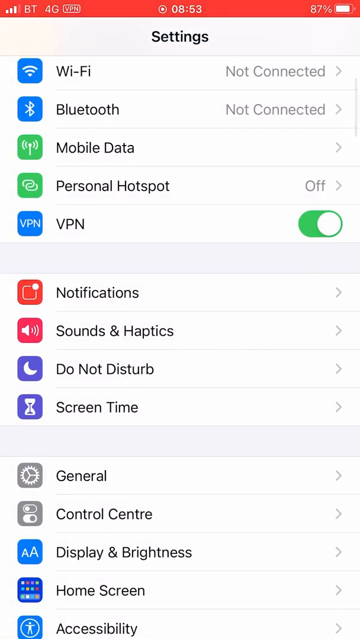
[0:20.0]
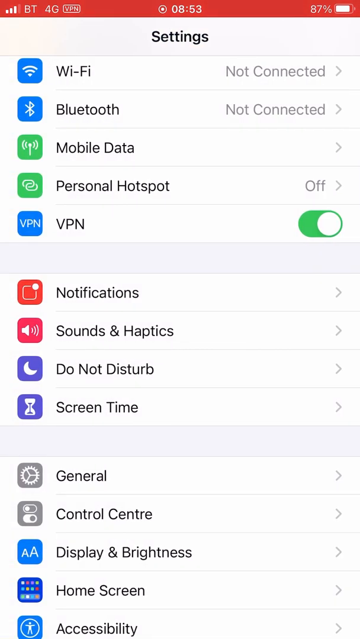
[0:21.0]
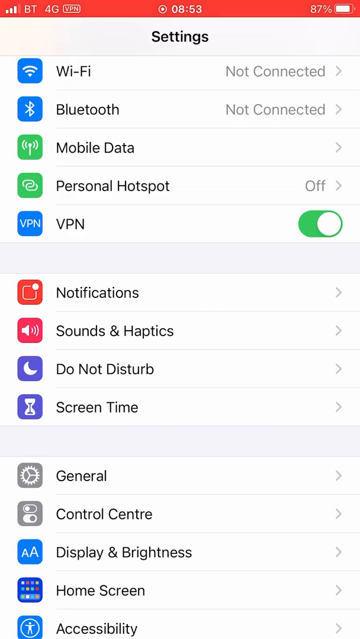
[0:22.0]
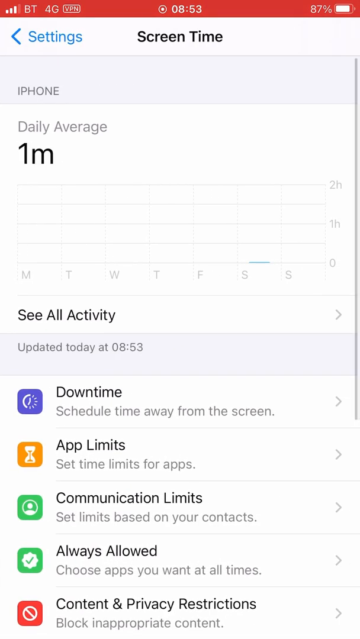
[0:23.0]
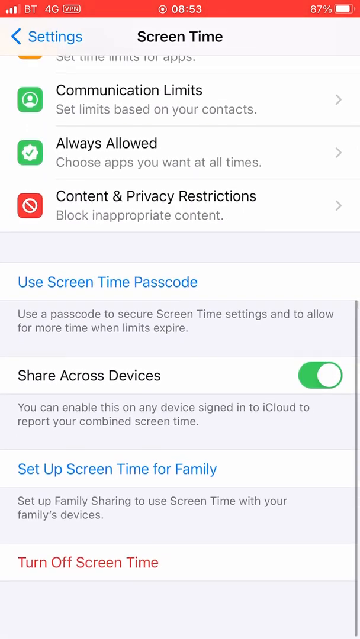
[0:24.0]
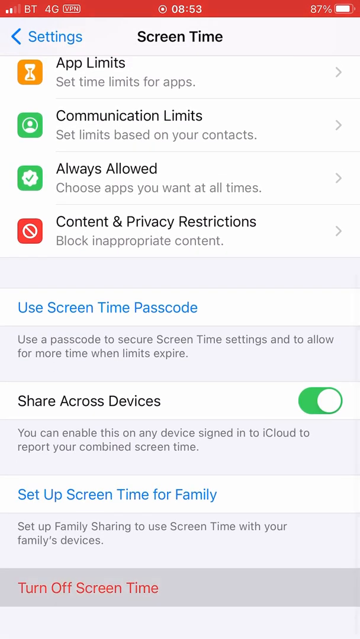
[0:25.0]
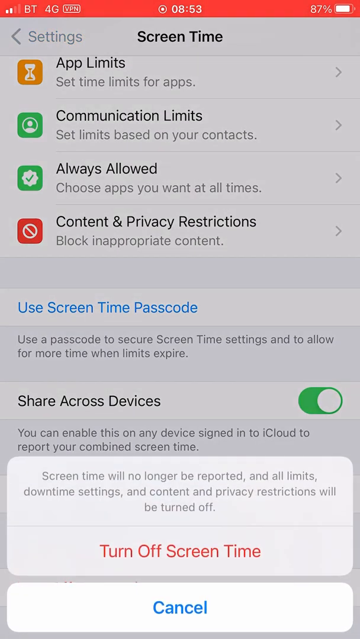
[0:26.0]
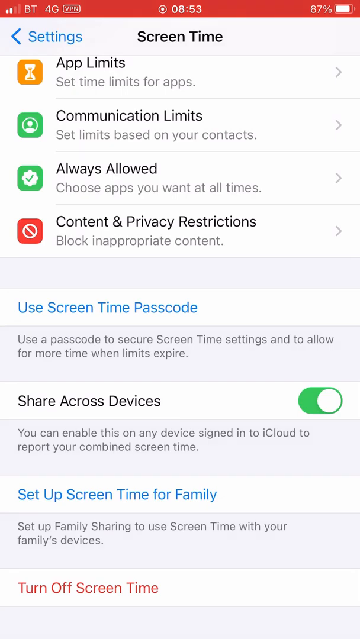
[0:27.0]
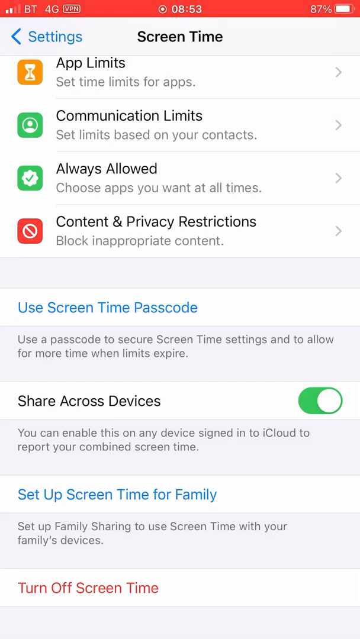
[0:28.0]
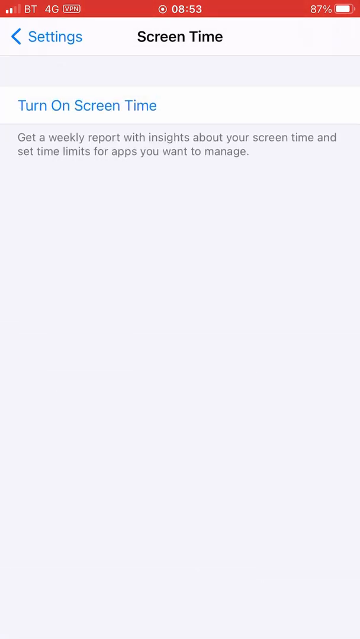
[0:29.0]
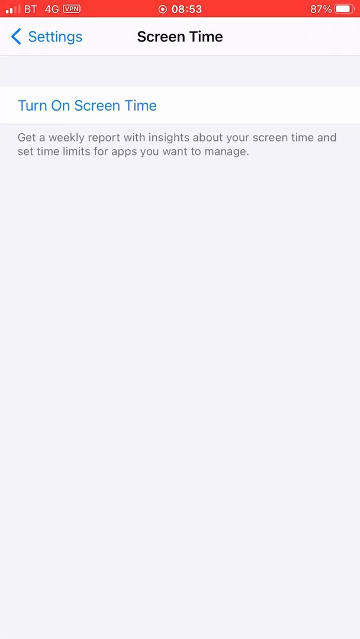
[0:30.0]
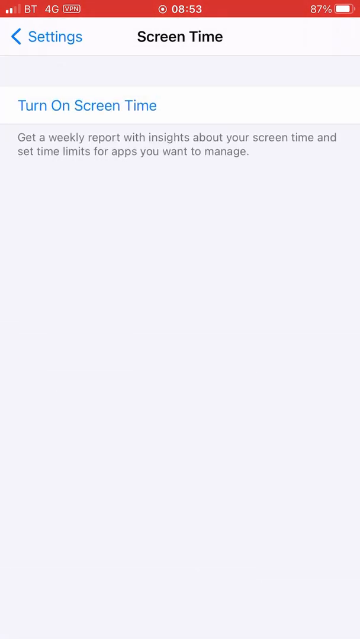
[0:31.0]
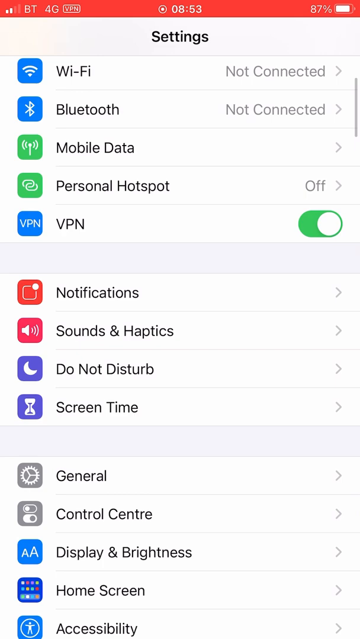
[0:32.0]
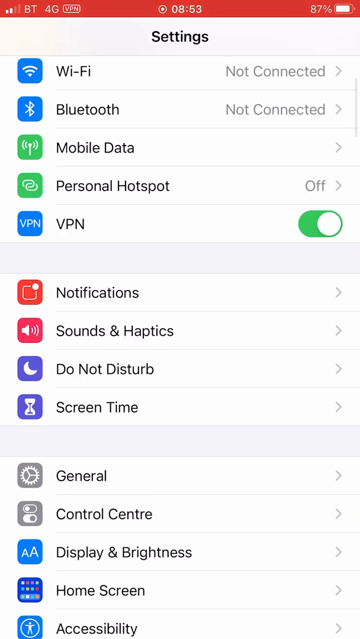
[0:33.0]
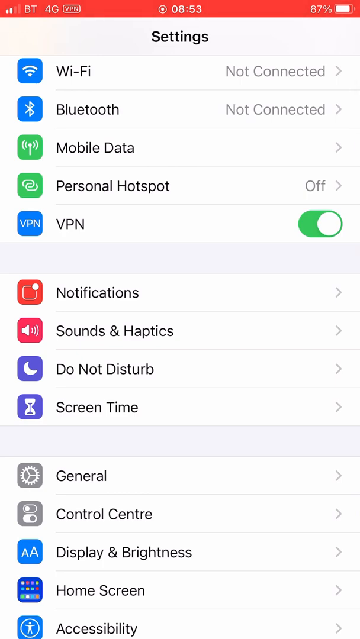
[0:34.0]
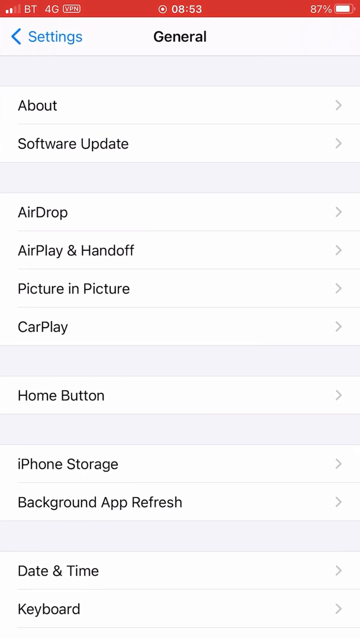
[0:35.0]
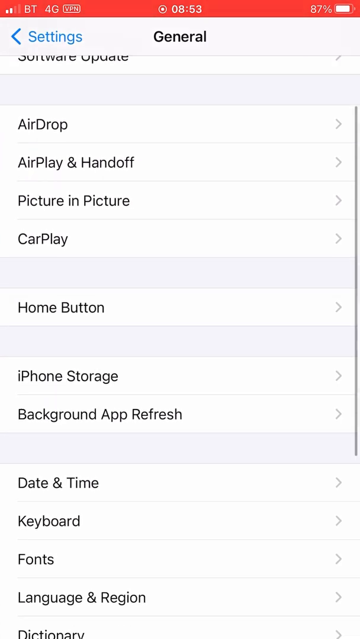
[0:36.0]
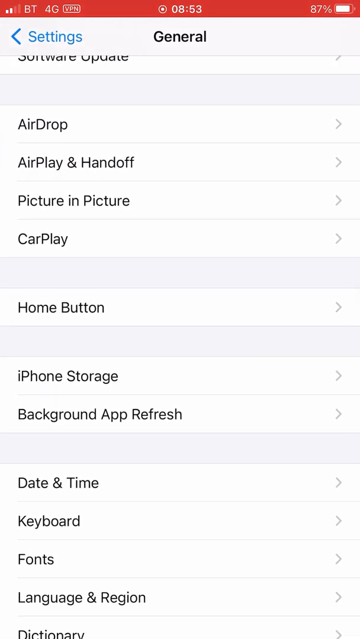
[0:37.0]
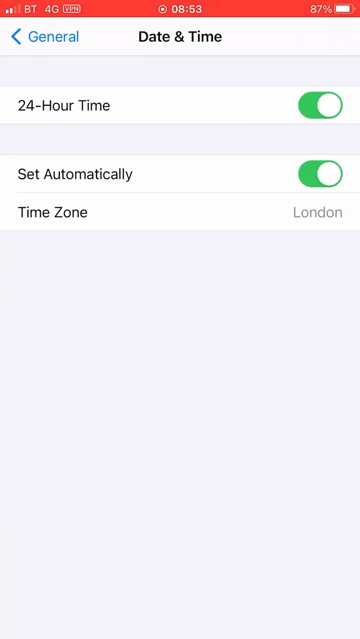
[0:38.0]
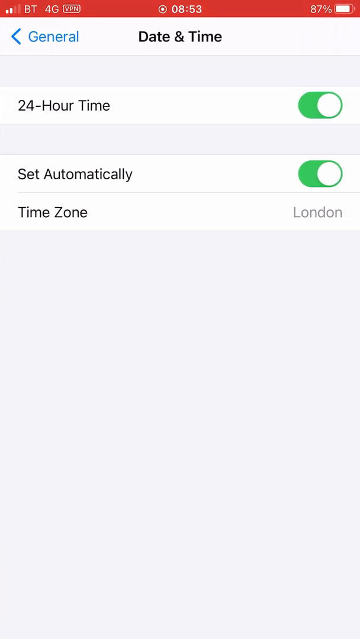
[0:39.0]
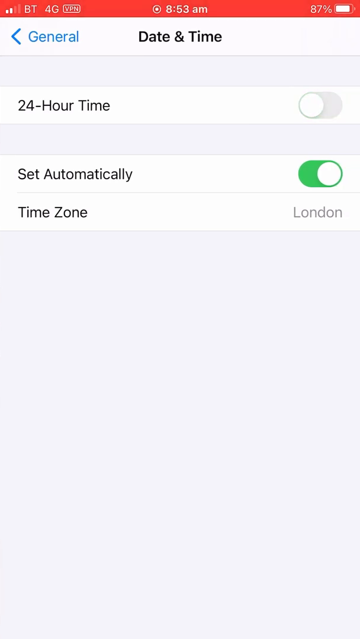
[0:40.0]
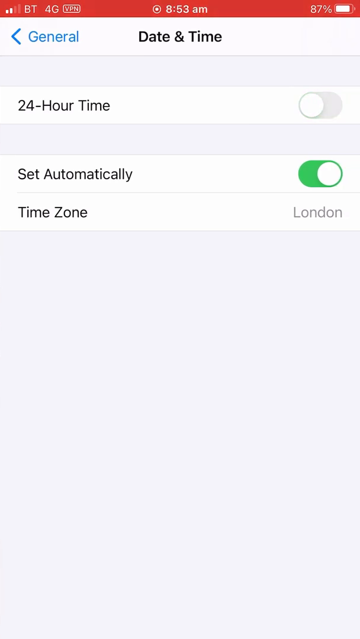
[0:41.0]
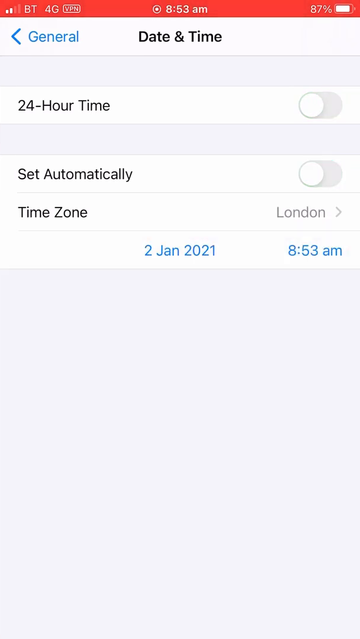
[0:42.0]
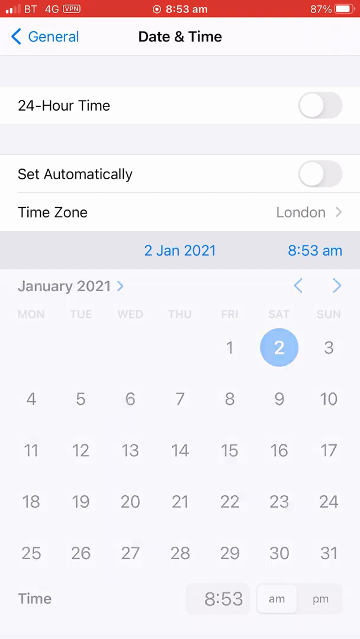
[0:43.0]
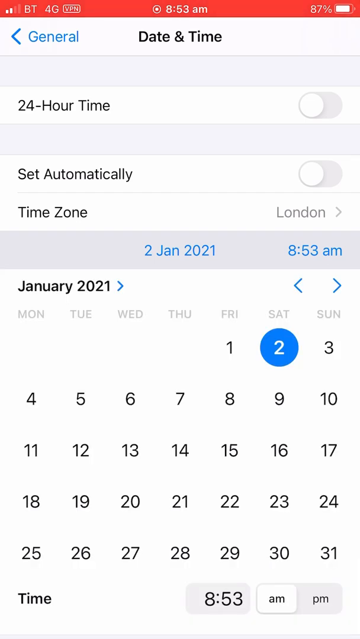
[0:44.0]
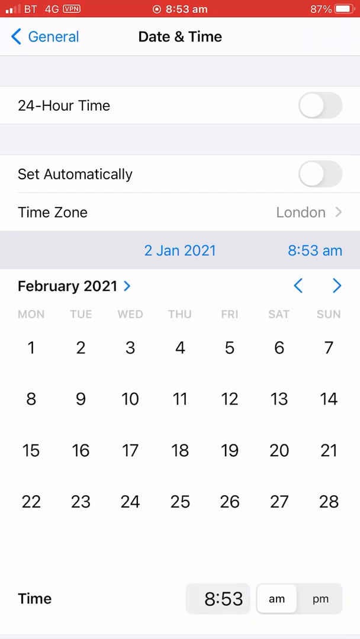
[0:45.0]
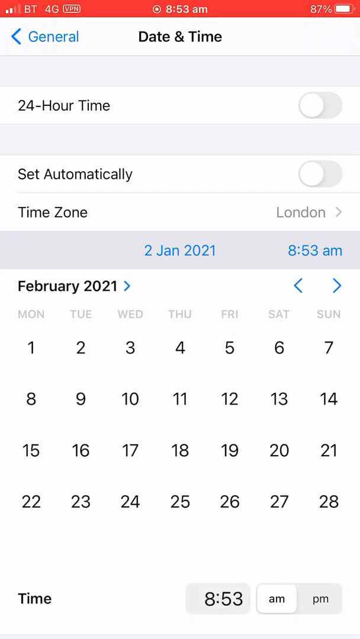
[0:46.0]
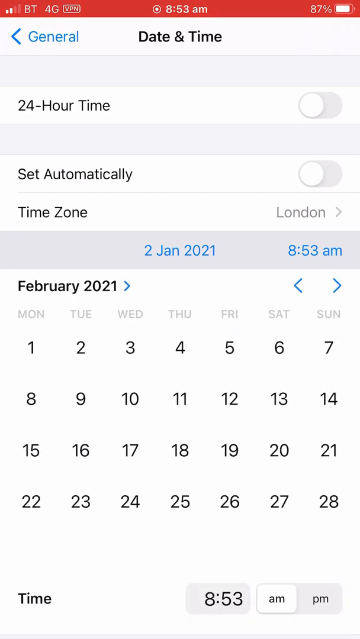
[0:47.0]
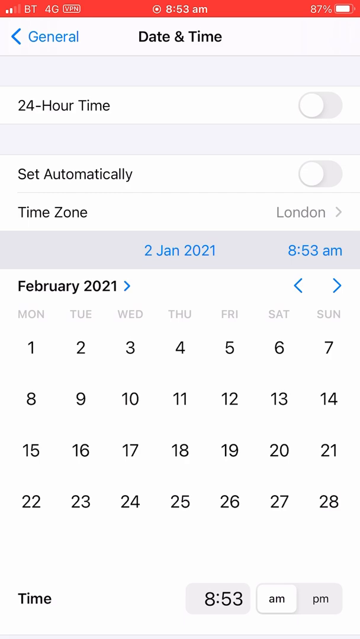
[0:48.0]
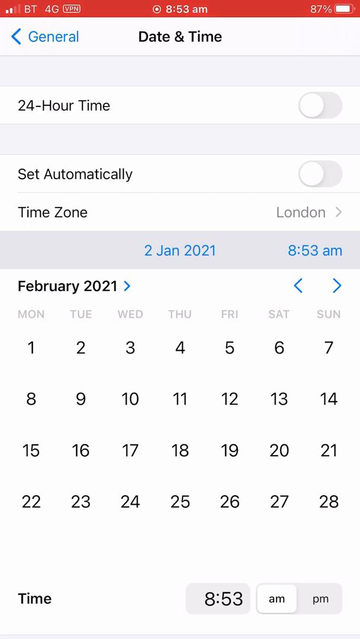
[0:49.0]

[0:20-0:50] In what appears to be a tutorial, the person is in the phone's Settings again and opens the Screen Time option, which shows a one-minute daily average. He taps Turn Off Screen Time and turns it off, then goes back to Settings and into General again. He opens Date & Time, turns off 24-hour time, turns off the automatic time setting, and sets the time zone and time manually.